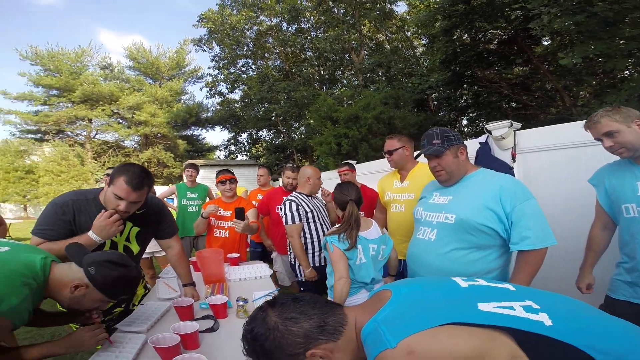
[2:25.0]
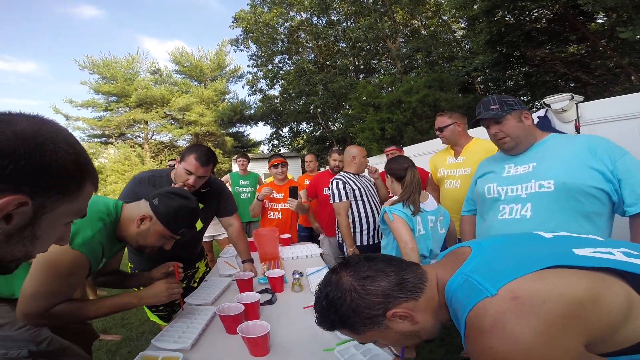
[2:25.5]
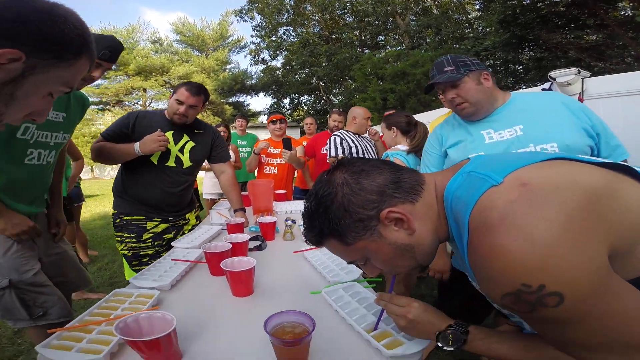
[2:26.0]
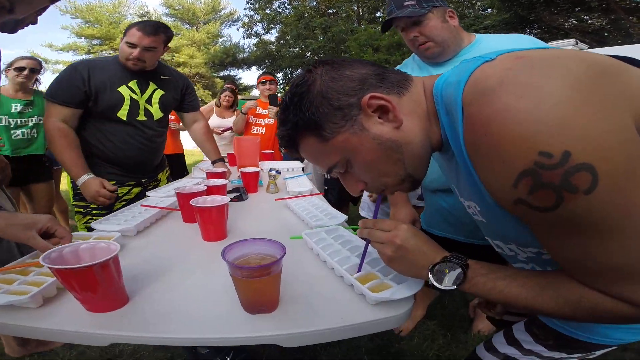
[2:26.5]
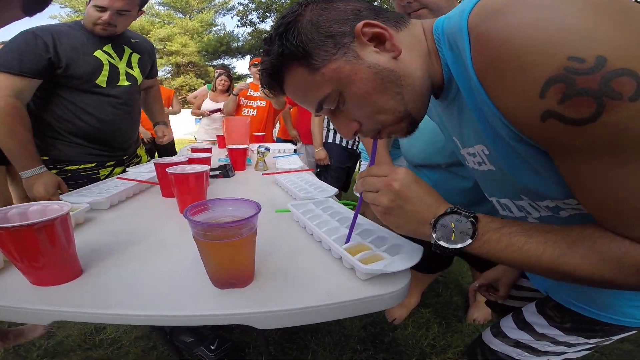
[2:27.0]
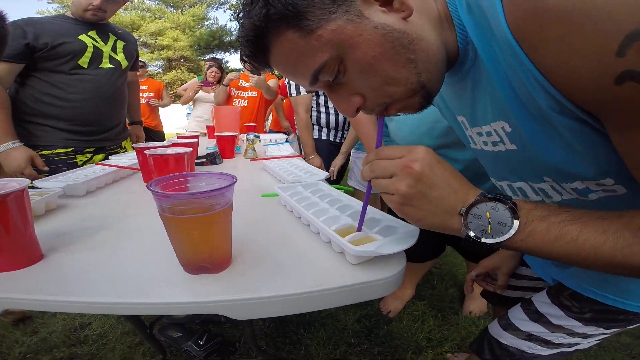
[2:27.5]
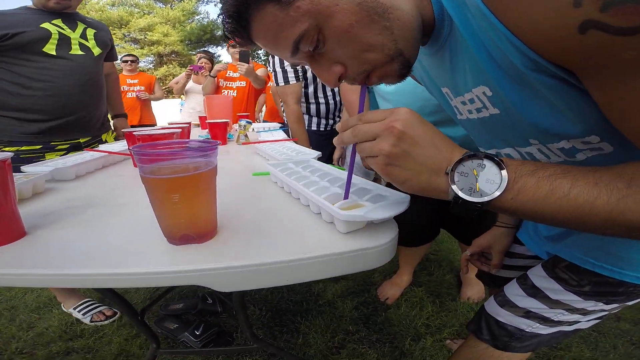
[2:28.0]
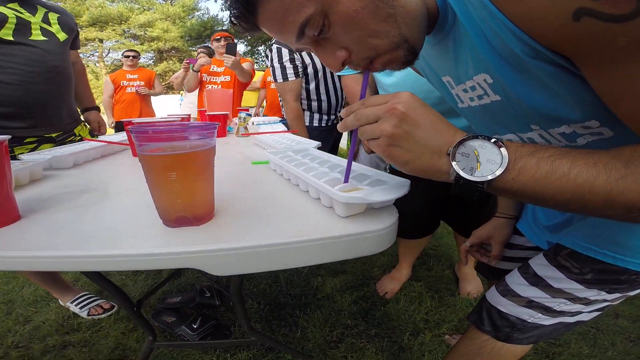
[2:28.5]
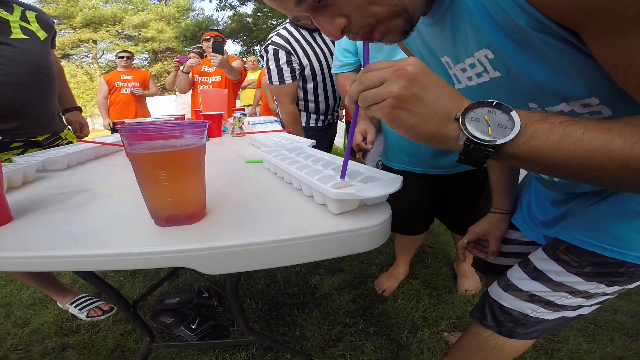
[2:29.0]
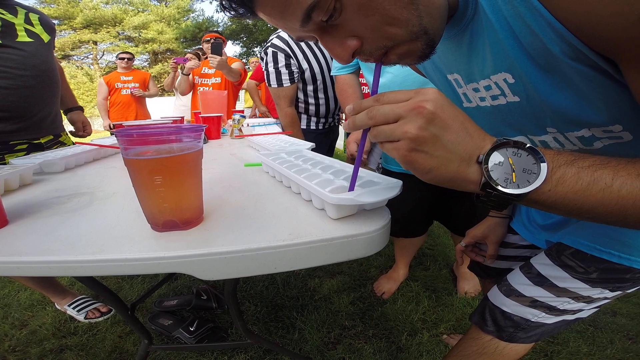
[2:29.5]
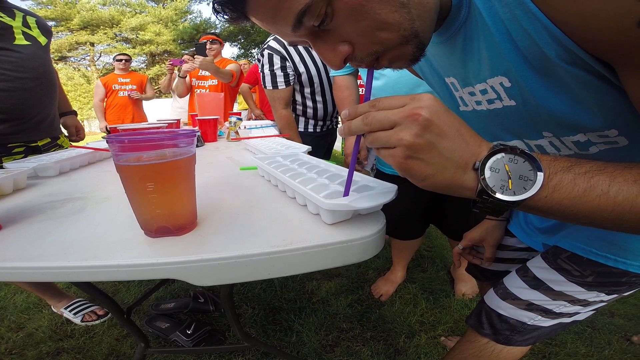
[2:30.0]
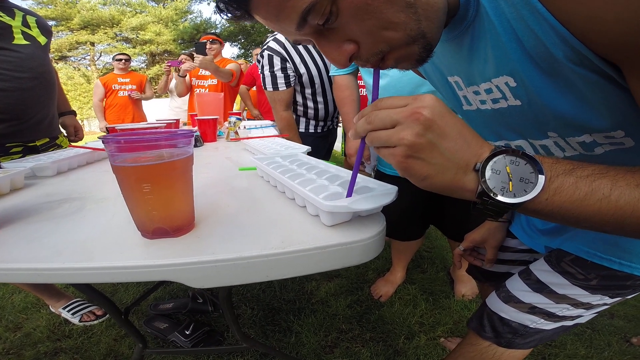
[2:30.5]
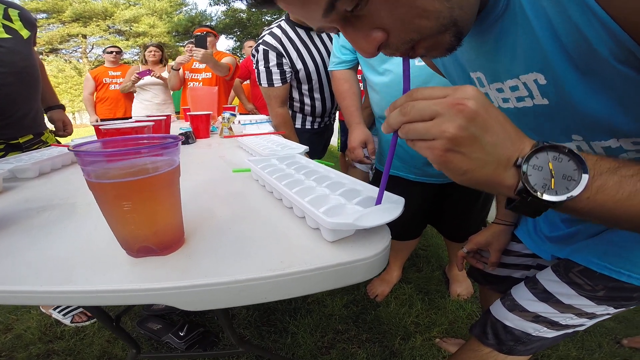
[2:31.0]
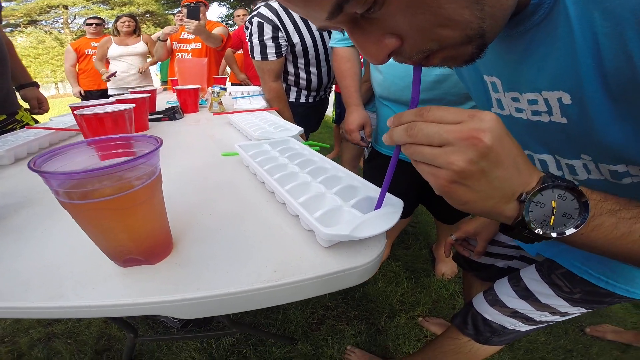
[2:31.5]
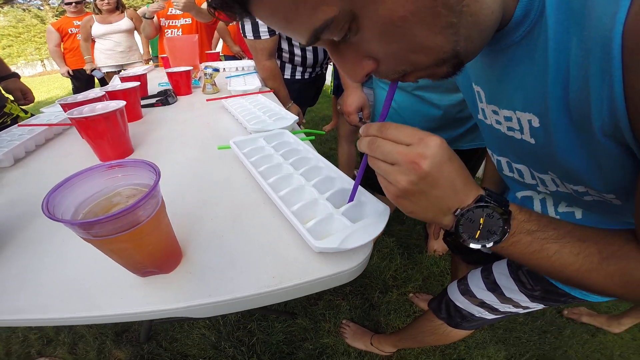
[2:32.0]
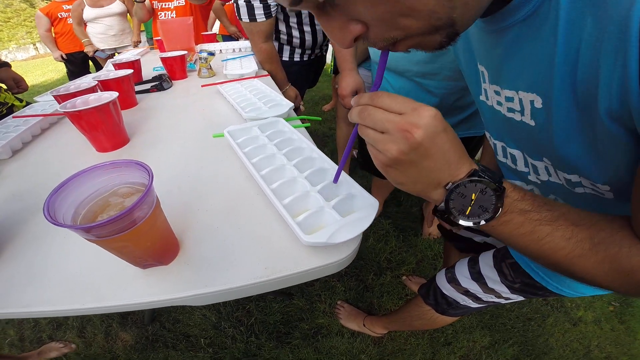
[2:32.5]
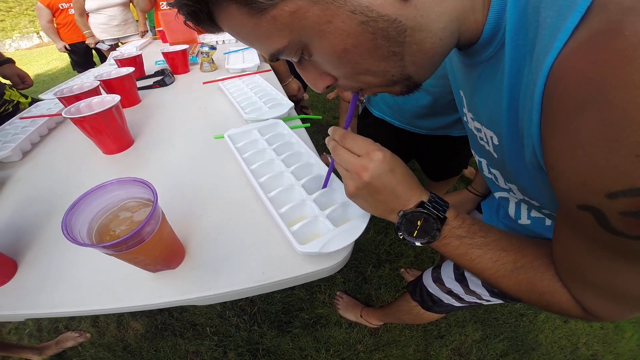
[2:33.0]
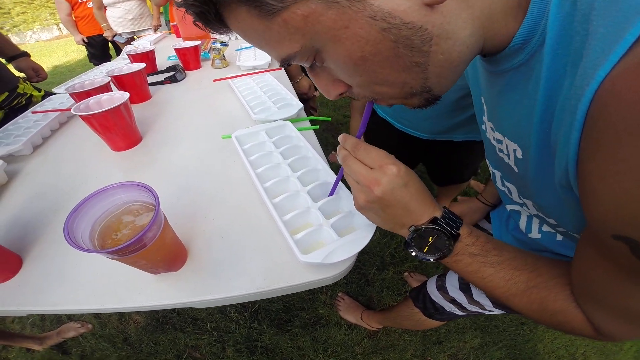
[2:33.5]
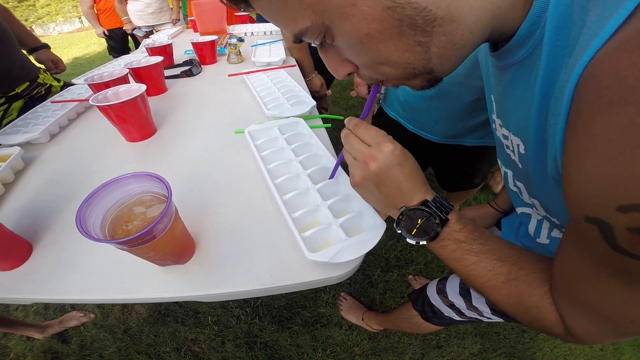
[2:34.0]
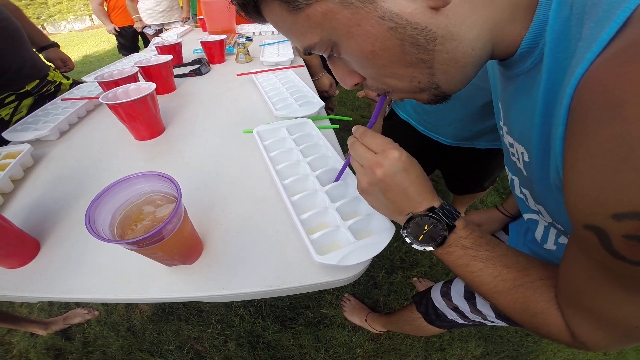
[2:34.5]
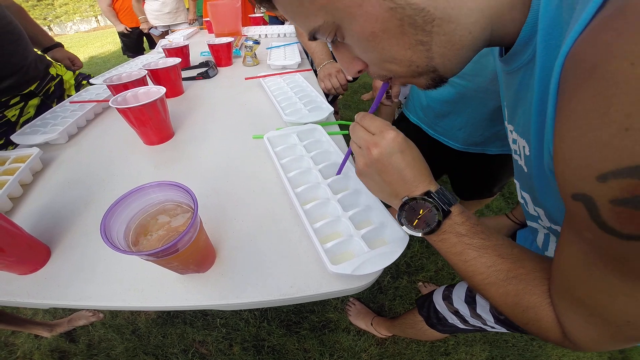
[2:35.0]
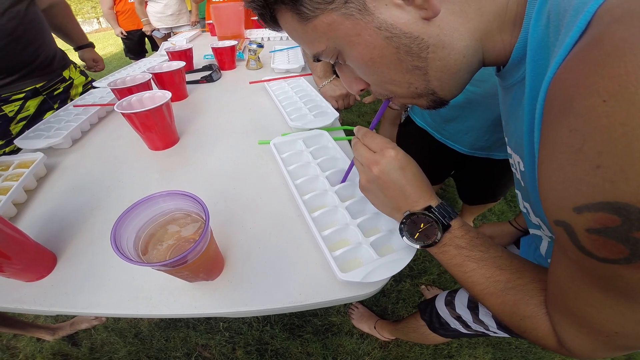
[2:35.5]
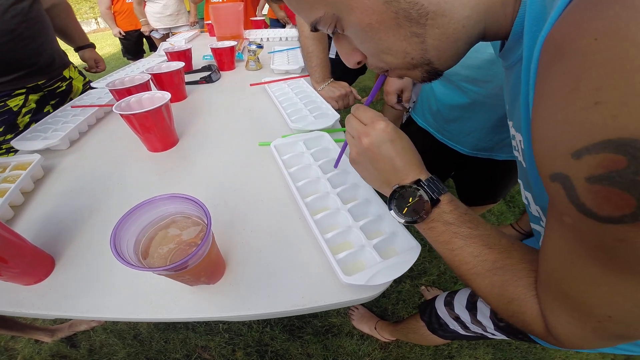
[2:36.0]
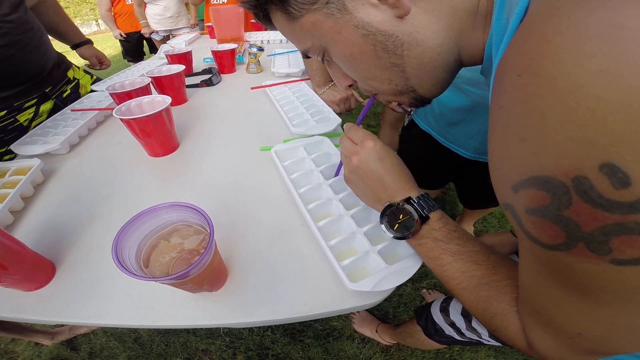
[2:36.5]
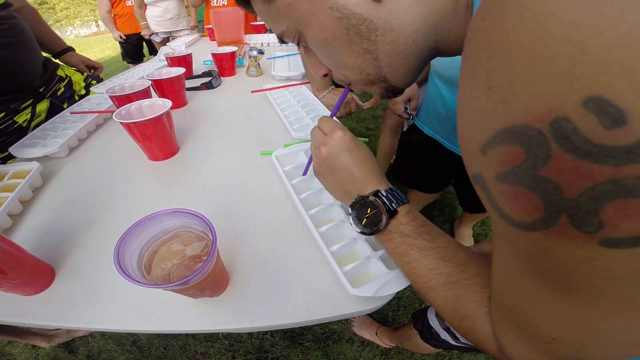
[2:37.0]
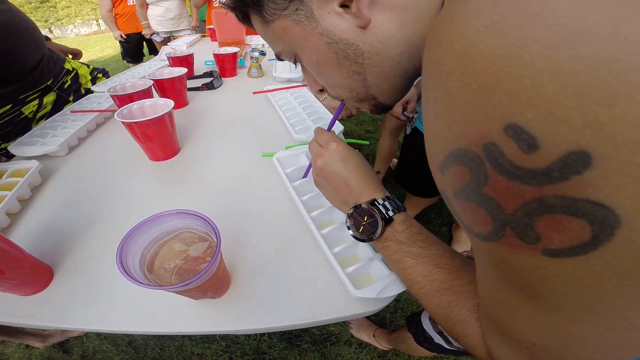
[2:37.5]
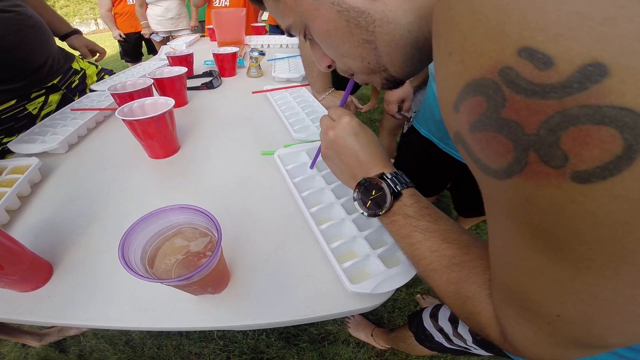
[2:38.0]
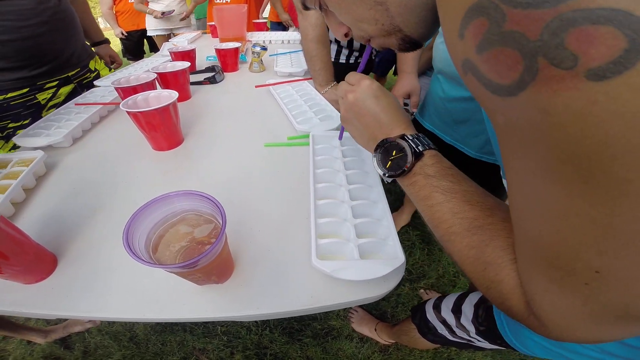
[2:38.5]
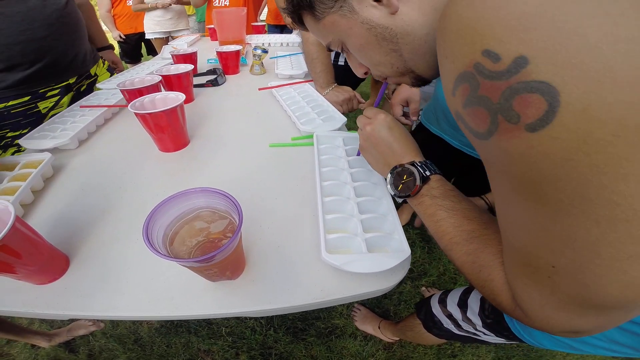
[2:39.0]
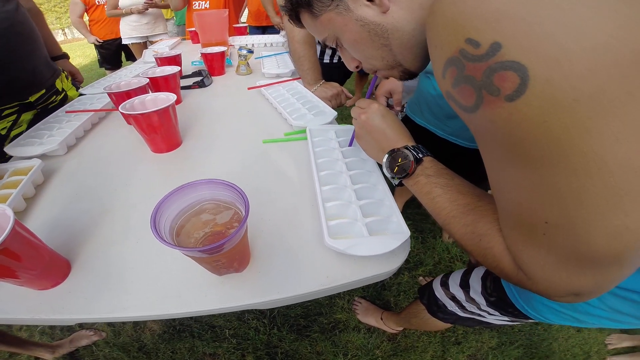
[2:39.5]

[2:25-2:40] A close-up, a bit of an overhead shot, shows the man on the light blue team on the right side of the table, their last performer, at the front edge of the table. Leaning over with the purple straw to his mouth, he sucks beer from the last sections of his ice cube tray, then goes back over sections he completed earlier for the last drops, which are not visible, making sure he is finished. He stays leaning over. Beneath the table, his bare feet are on the green grass, and he wears a large oval-faced wristwatch on his left wrist. On the edge of the table between him and his counterpart is the clear plastic cup filled almost to the top, presumably with beer. Little of his green team counterpart across the table is visible, but he has started and is almost a full tray behind; the green team is clearly losing. Plenty of spectators are in the background, not clearly visible in the close-up, including the man in the white and black vertically striped referee jersey, who talks to a woman on the light blue team and then leans over to look at the tray to make sure the man is finished.